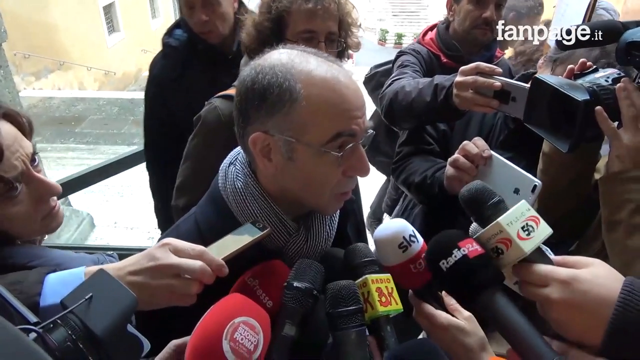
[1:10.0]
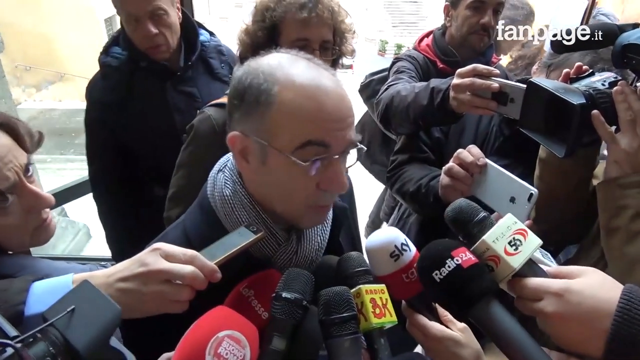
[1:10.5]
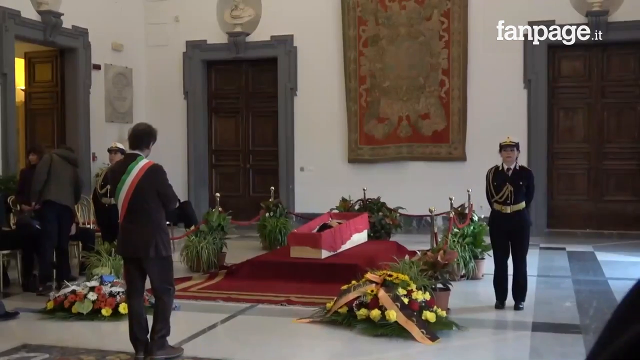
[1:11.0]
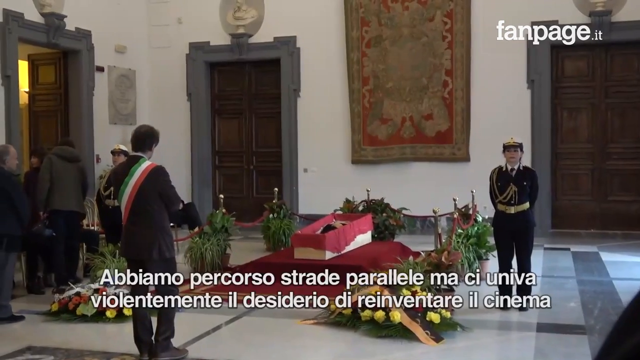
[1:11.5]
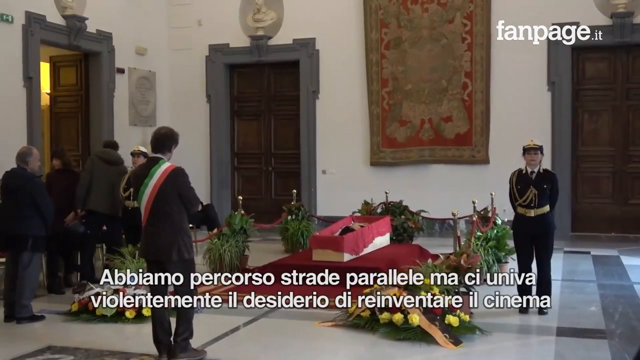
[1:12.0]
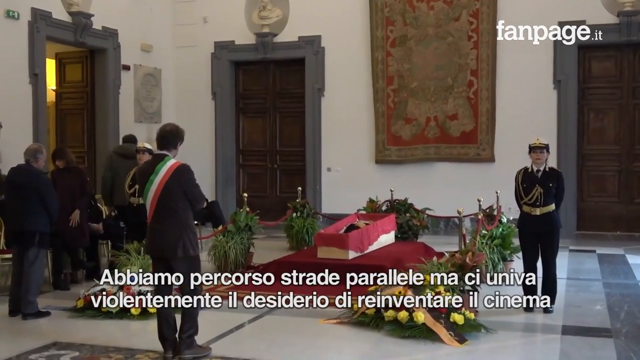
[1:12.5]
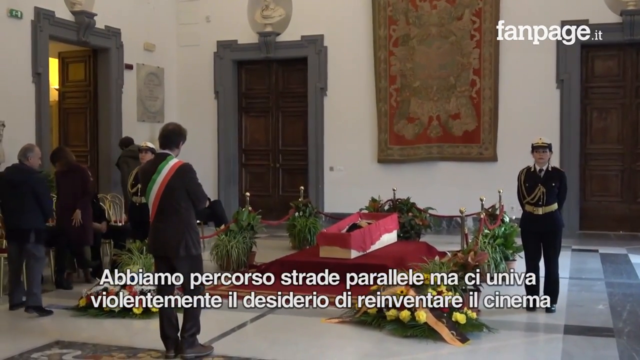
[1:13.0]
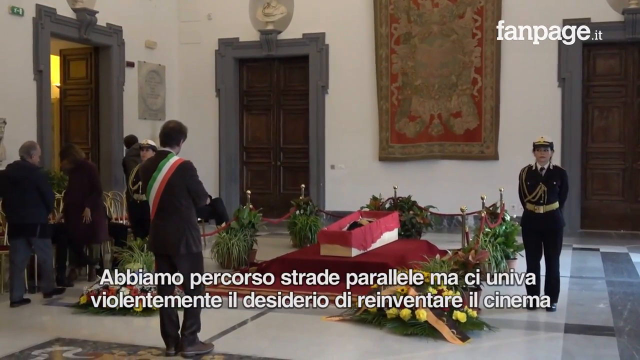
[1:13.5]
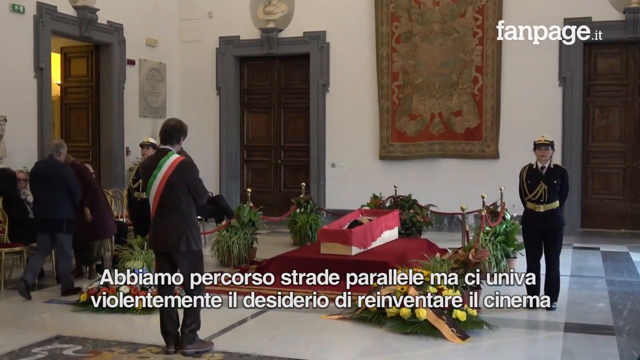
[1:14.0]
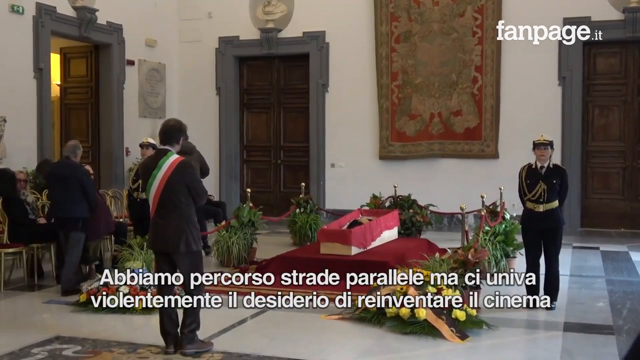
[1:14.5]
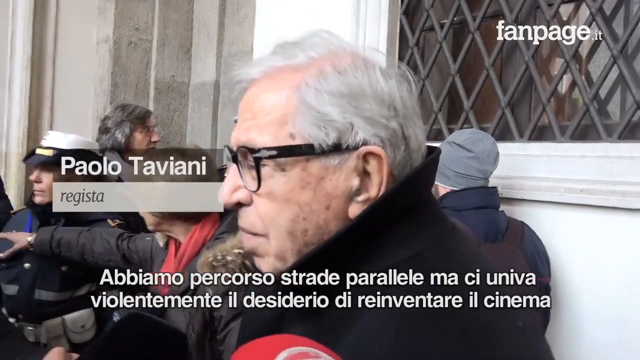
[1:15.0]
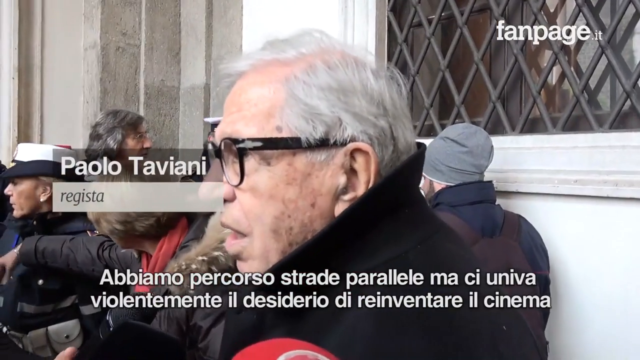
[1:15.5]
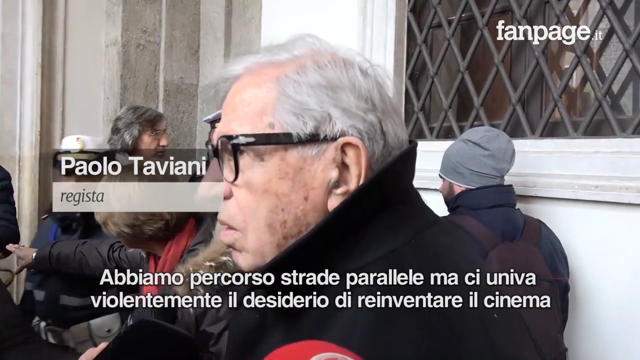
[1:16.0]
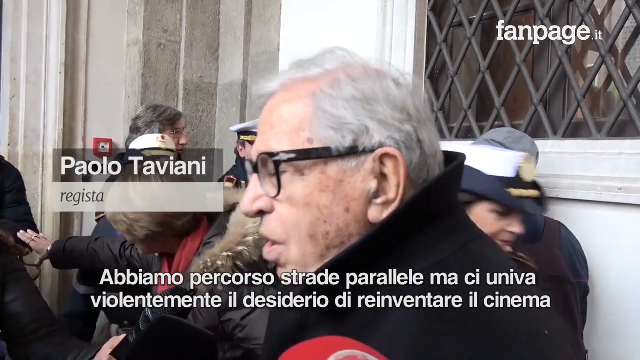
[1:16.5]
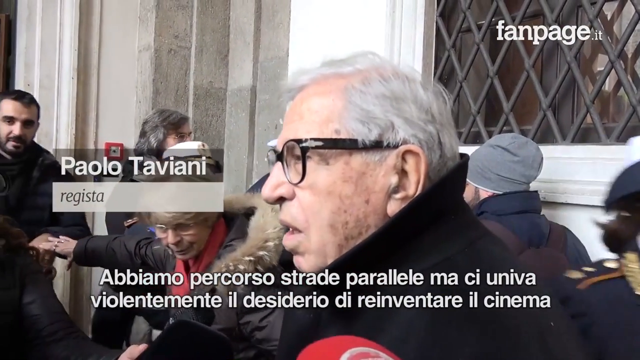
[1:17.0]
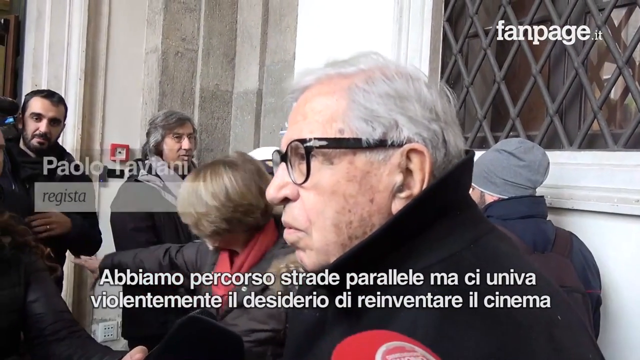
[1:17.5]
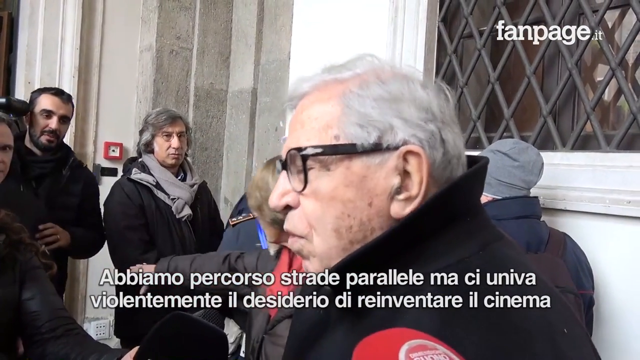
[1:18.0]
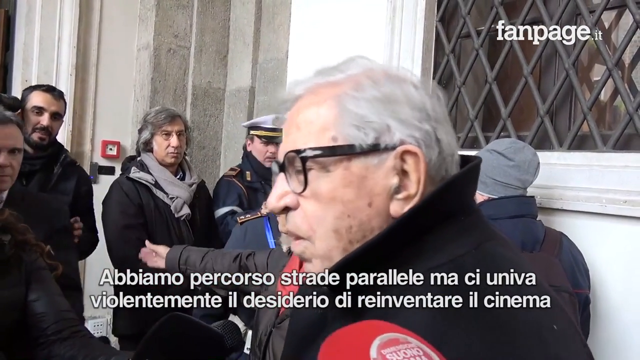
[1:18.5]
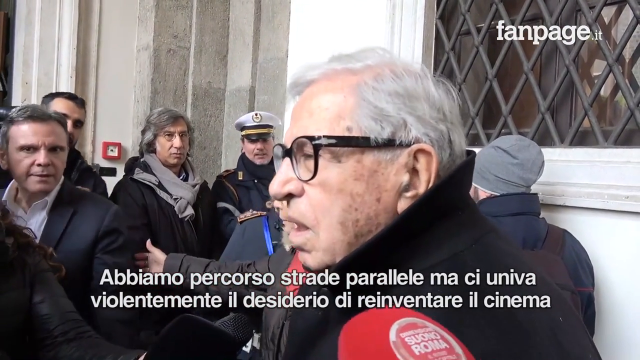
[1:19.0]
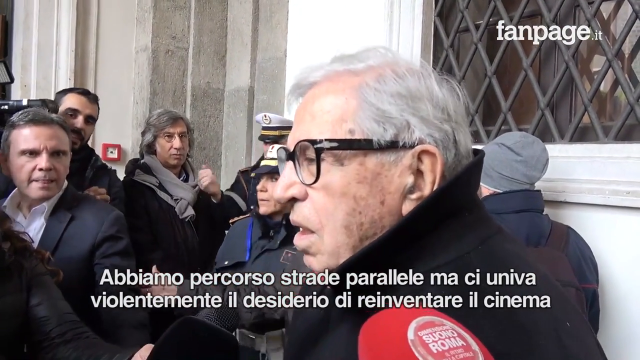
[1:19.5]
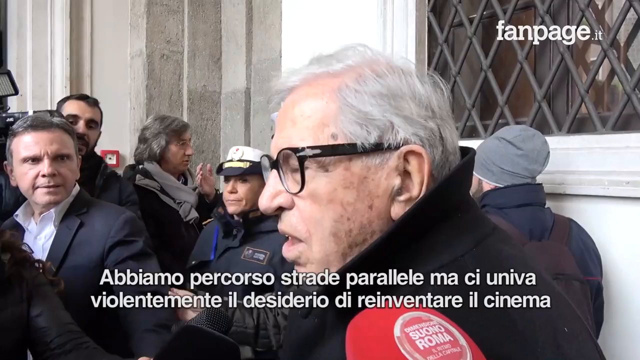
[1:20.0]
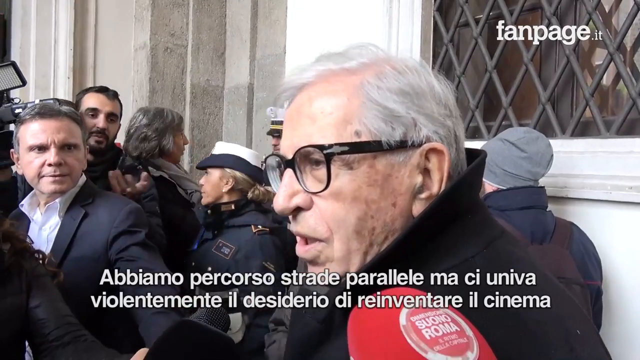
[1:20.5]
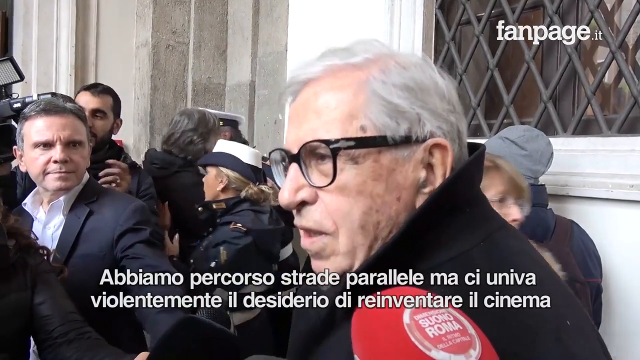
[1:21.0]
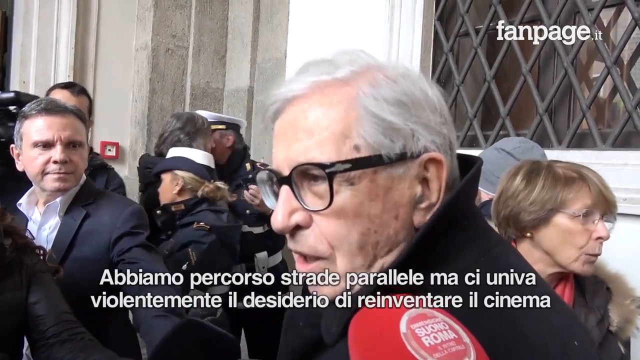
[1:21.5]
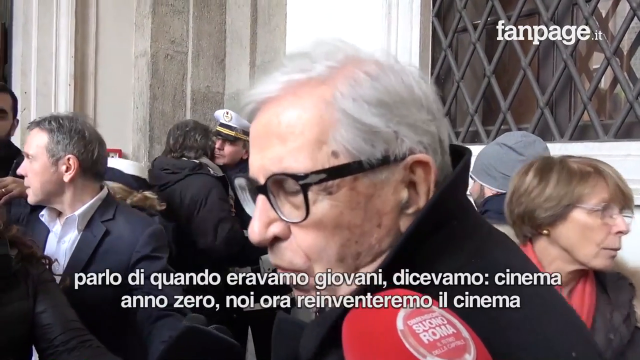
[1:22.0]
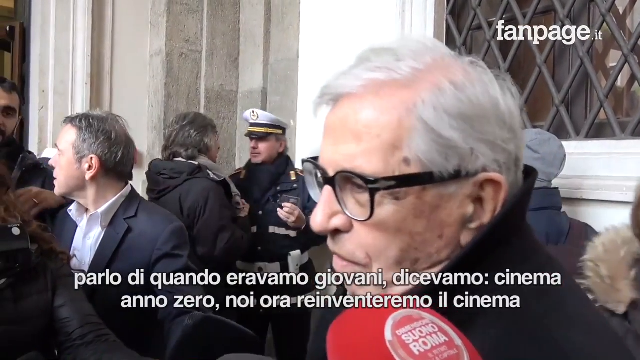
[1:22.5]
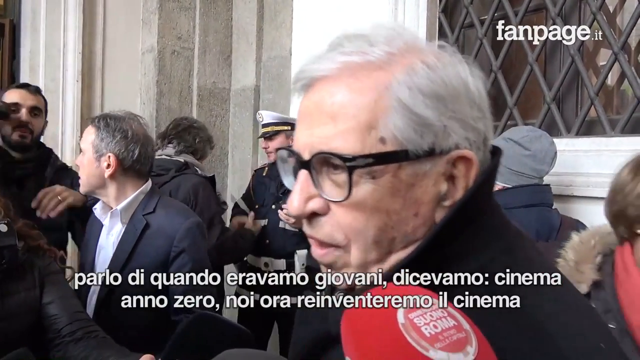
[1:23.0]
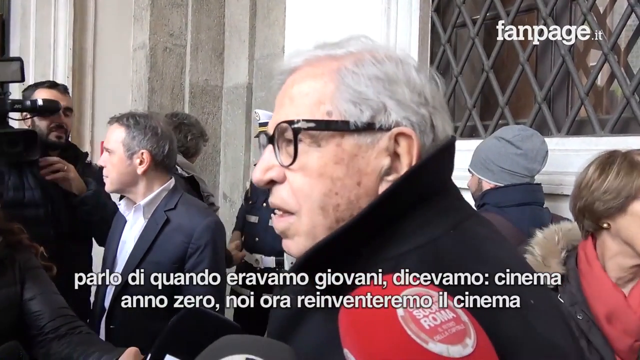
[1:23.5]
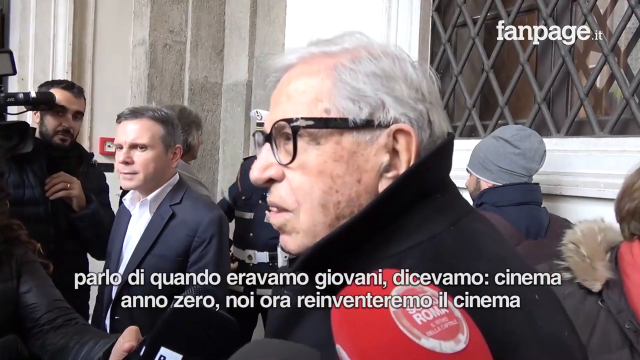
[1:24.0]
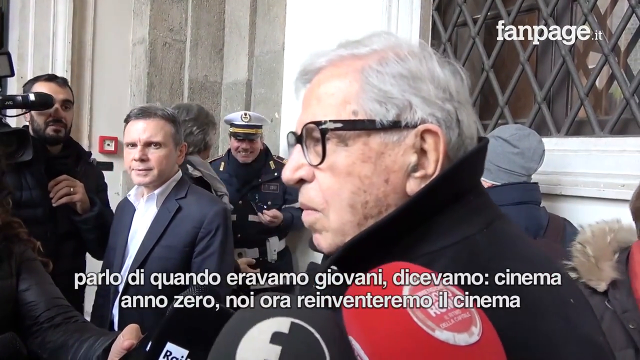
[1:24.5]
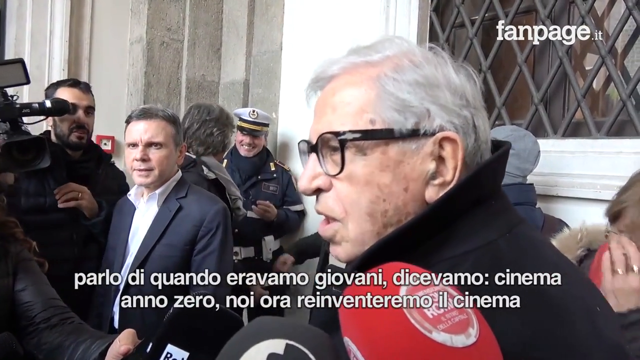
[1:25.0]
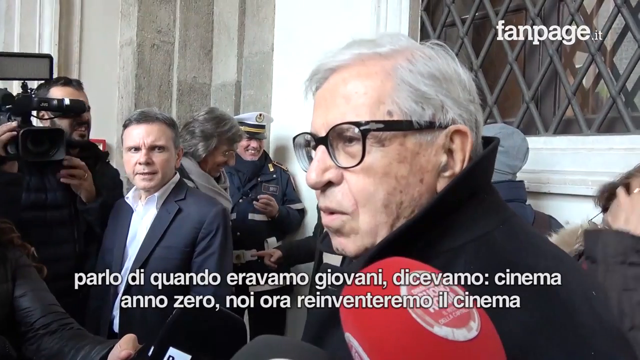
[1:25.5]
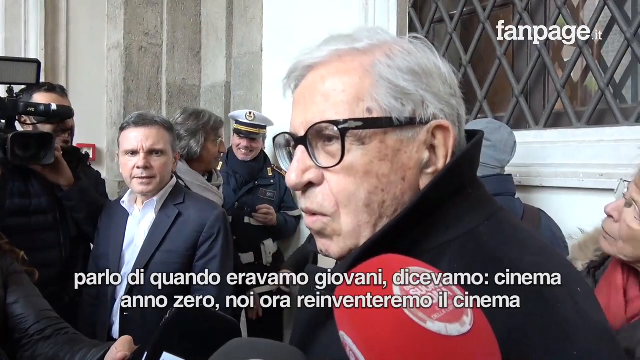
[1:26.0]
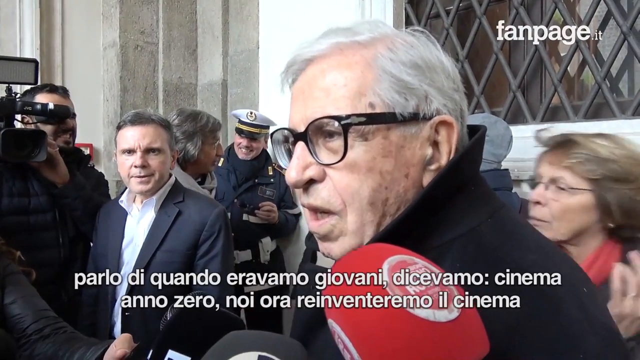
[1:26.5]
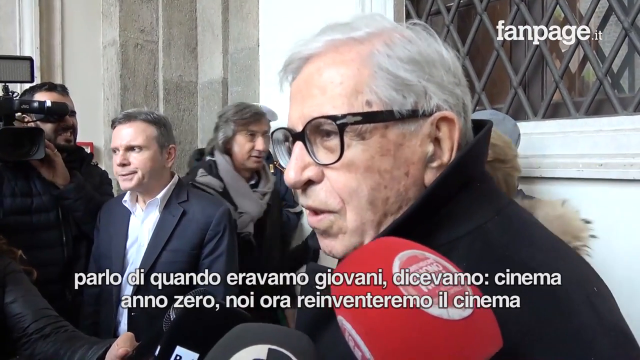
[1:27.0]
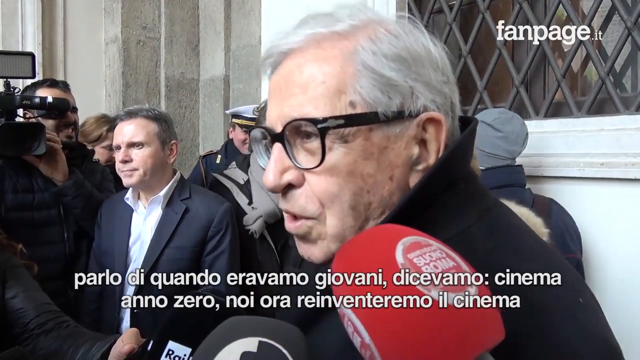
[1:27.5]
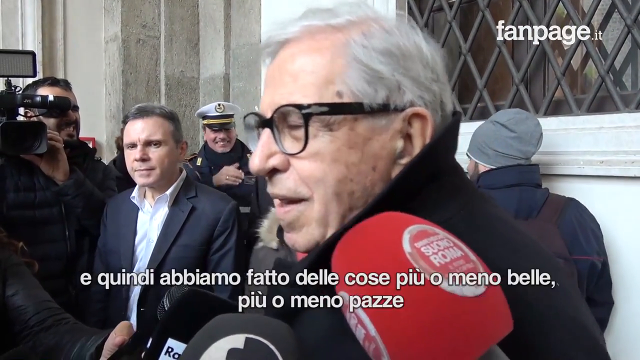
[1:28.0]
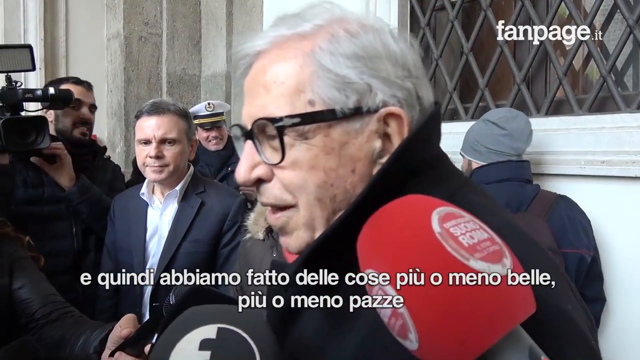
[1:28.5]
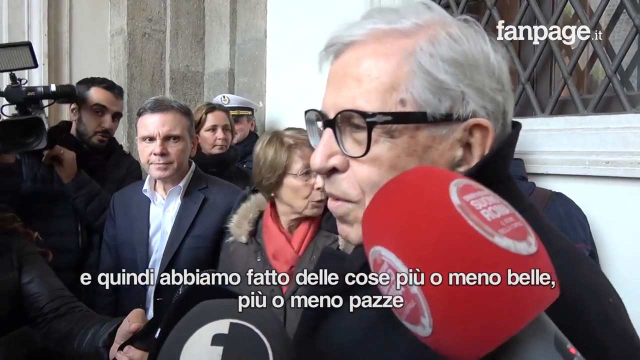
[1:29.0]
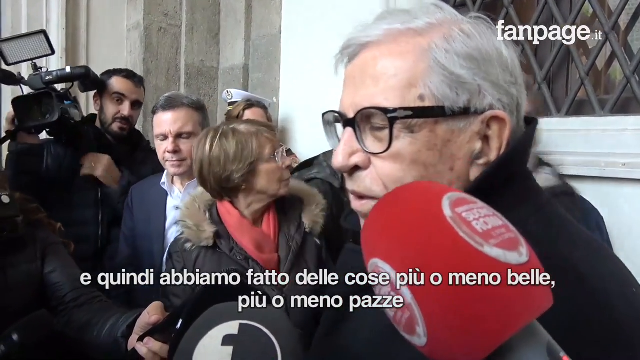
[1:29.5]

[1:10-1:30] The video cuts to the interior room with the velvet rope and a female guard, where what looks like a coffin is in the middle. It is on top of a red velvet cloth, and the coffin is open, with red velvet cloth inside. The room has vaulted ceilings and three large doors, and a wall tapestry on the back wall appears to bear an emblem or coat of arms. The small casket is surrounded by ceremonial plants and a flower spray. A man wearing an Italian flag sash, possibly the president or prime minister, pays his respects. The video then cuts back to an outdoor interview with Paolo Taviani, the older man from the beginning. A cameraman is behind him along with some reporters of mixed gender, and a guard is somewhere in the back near the door. He speaks calmly in front of the press and cracks a smile at one point.